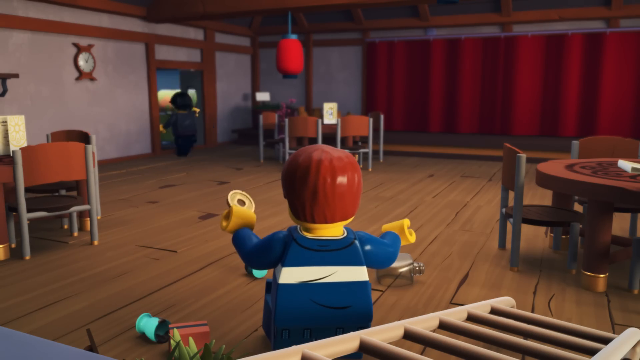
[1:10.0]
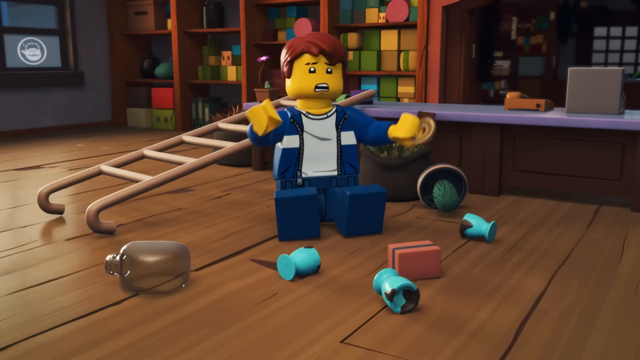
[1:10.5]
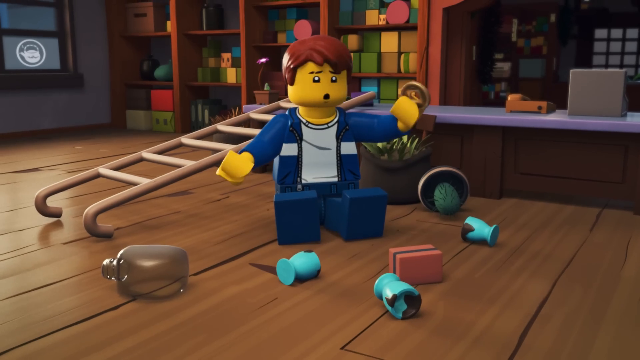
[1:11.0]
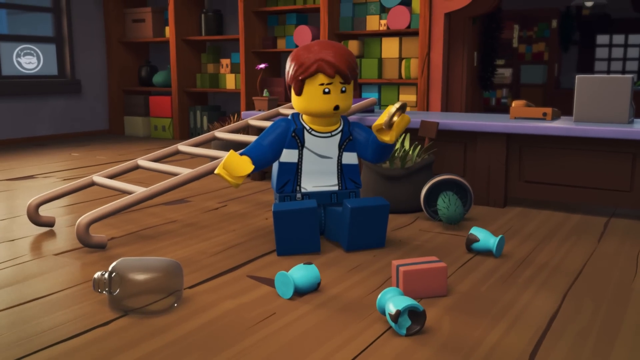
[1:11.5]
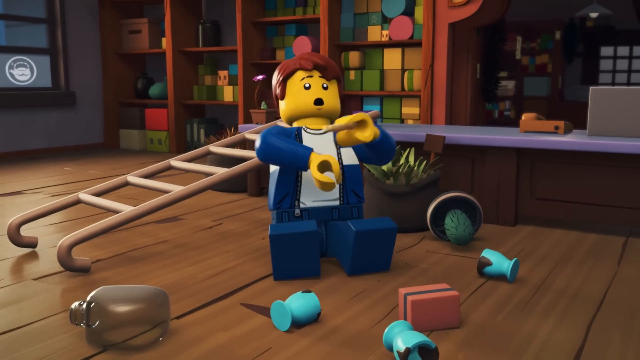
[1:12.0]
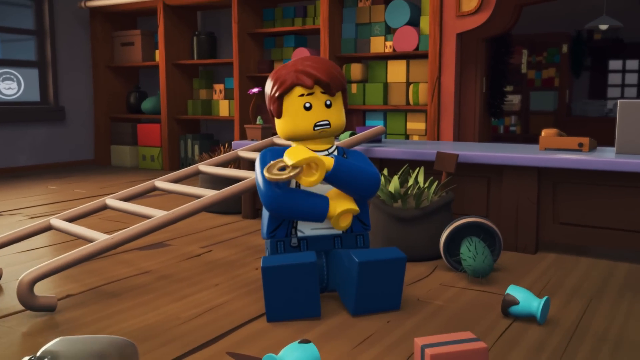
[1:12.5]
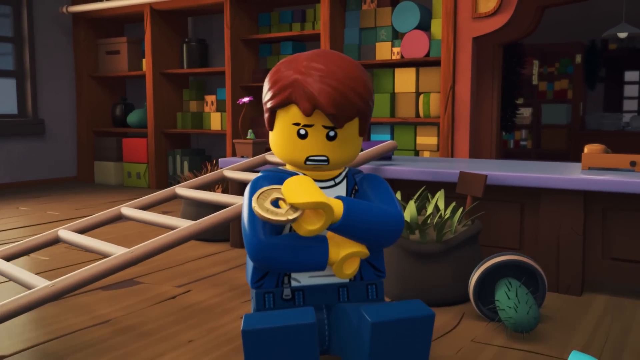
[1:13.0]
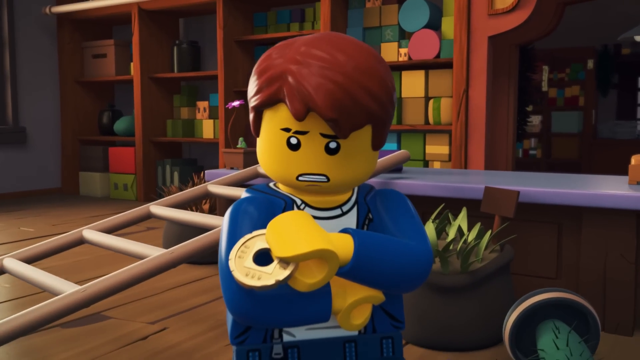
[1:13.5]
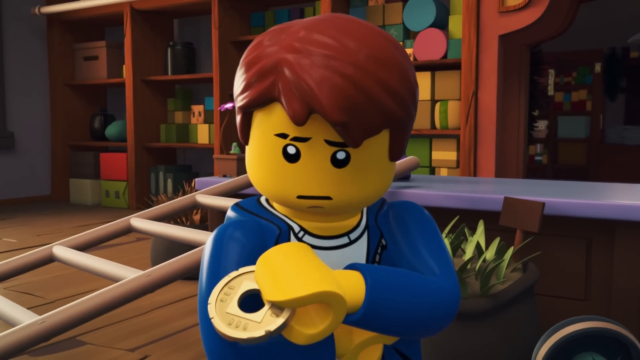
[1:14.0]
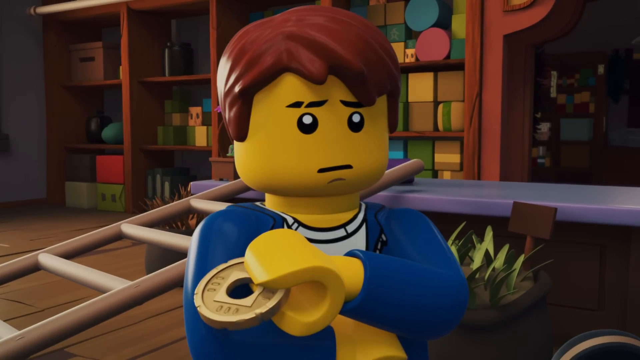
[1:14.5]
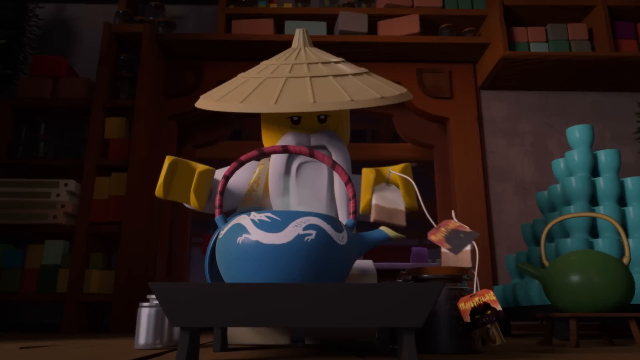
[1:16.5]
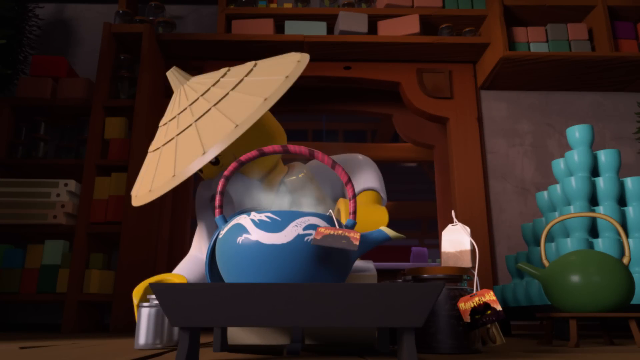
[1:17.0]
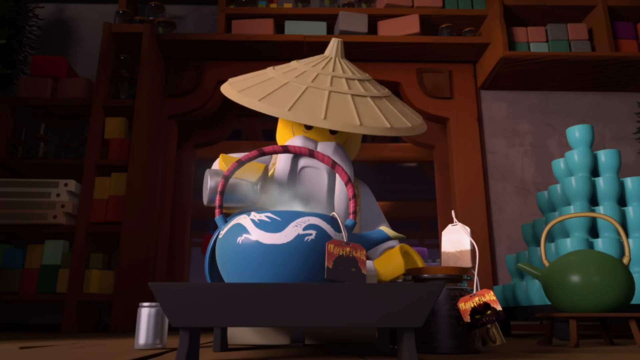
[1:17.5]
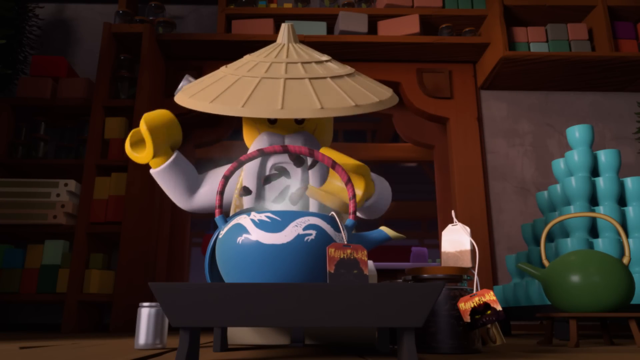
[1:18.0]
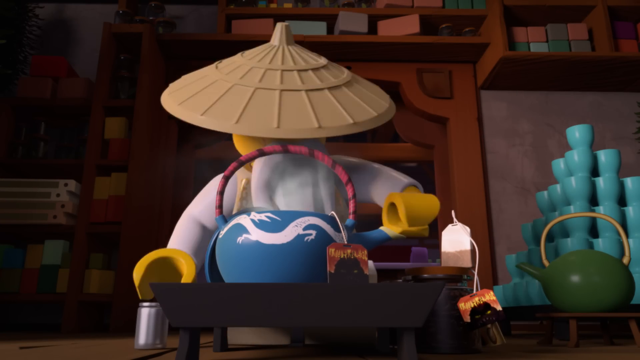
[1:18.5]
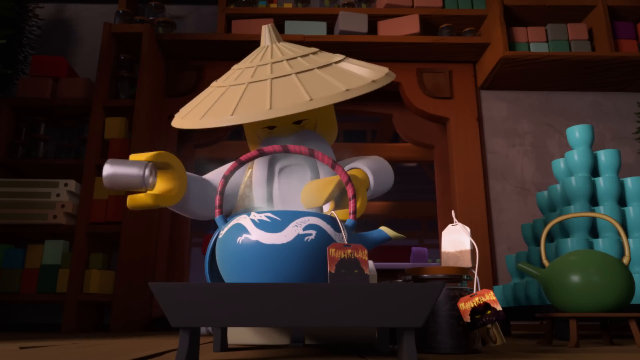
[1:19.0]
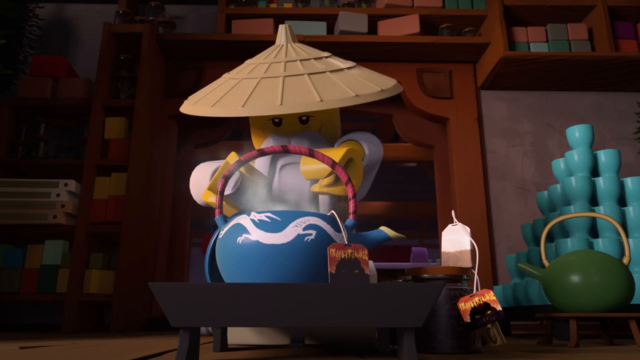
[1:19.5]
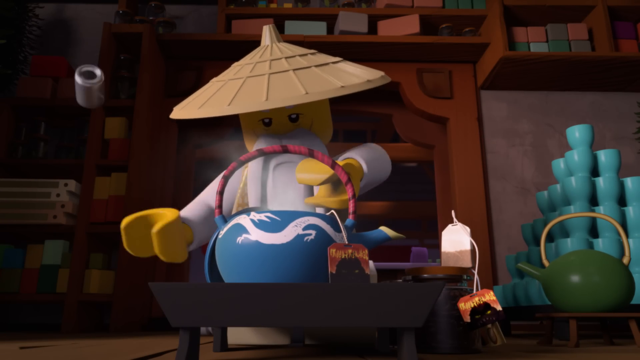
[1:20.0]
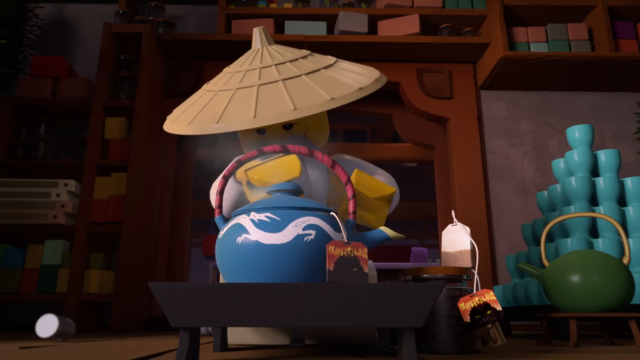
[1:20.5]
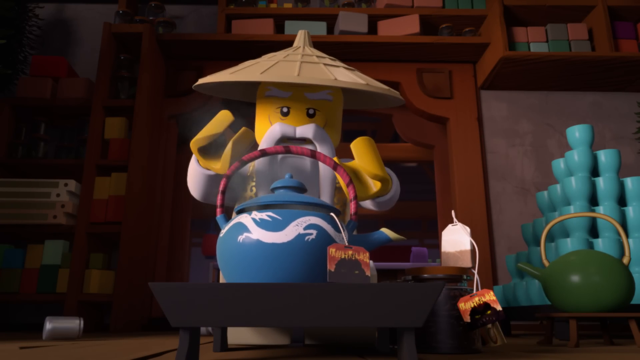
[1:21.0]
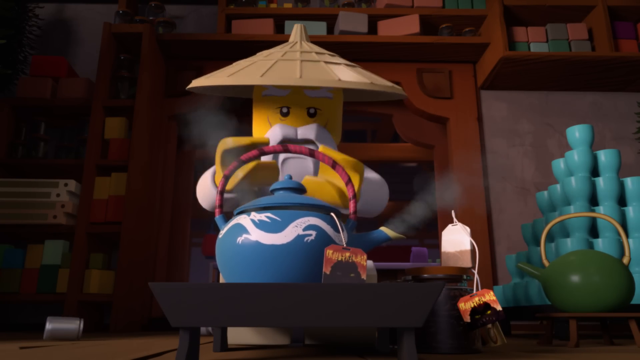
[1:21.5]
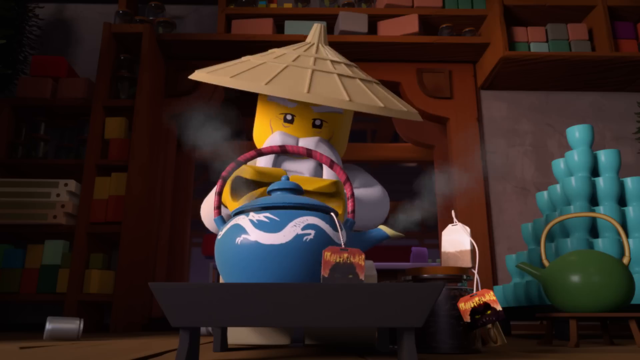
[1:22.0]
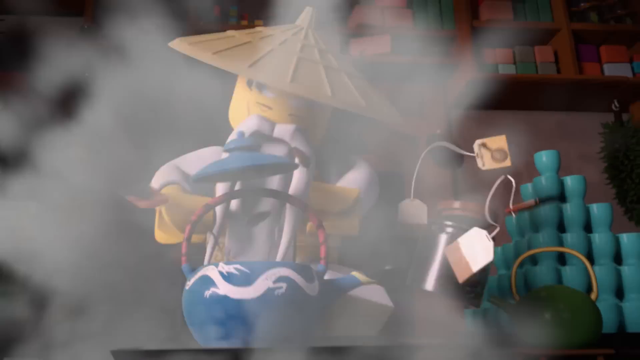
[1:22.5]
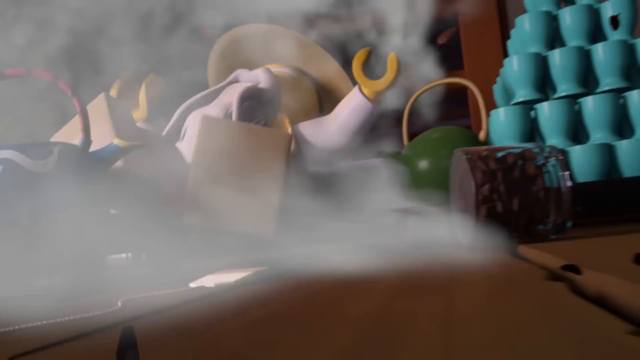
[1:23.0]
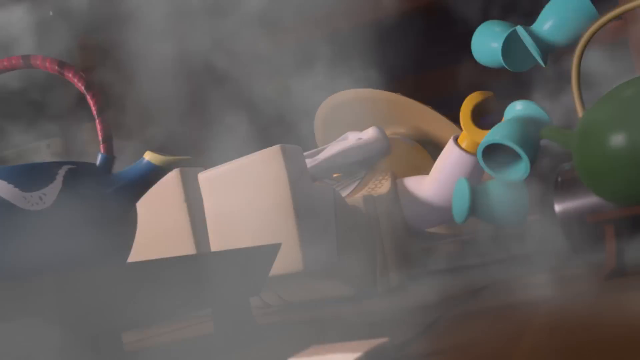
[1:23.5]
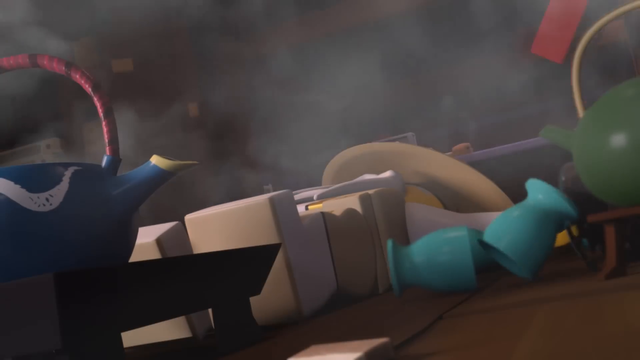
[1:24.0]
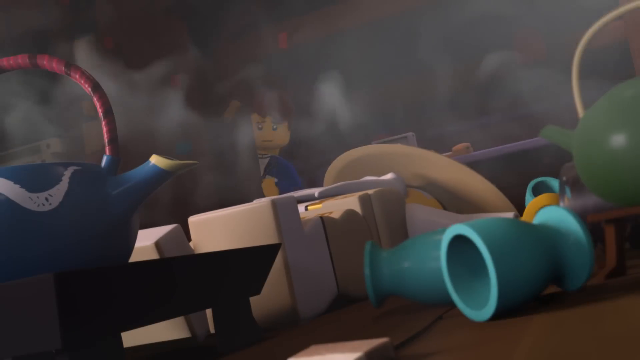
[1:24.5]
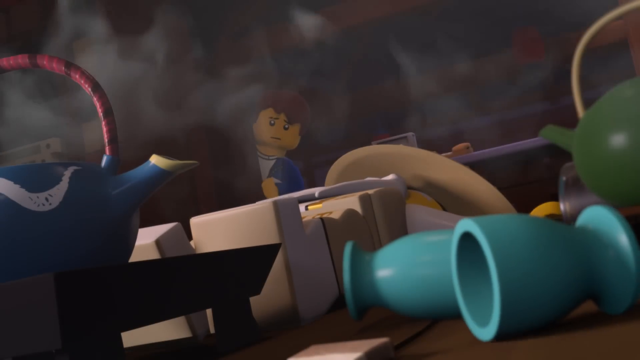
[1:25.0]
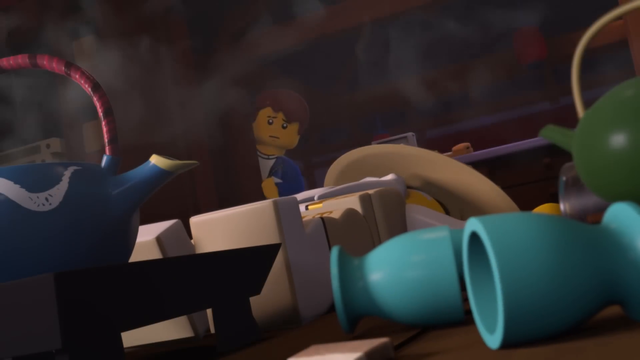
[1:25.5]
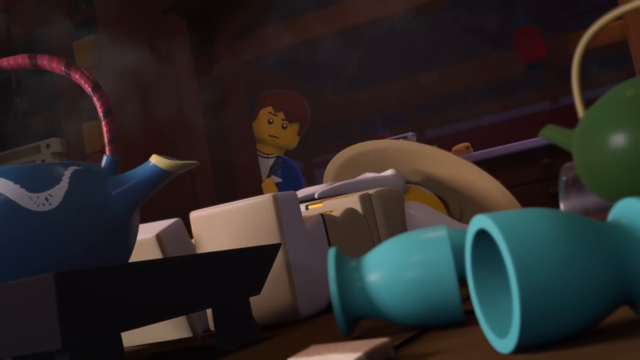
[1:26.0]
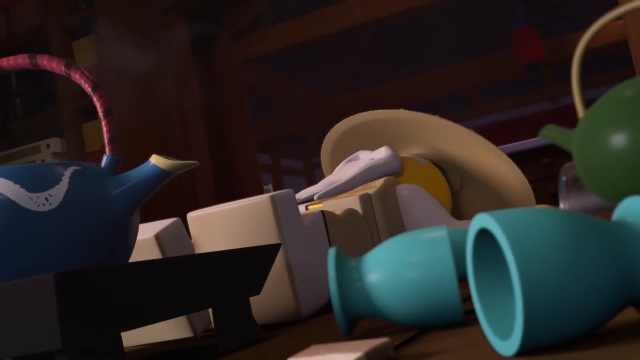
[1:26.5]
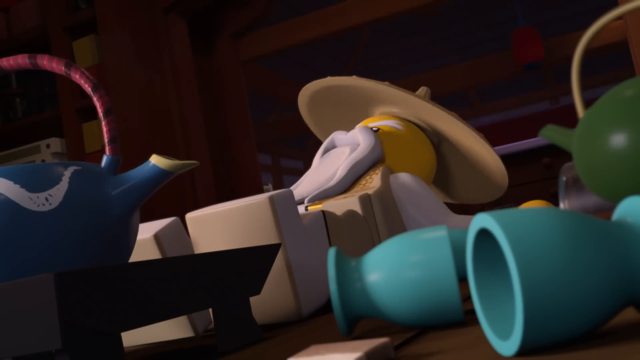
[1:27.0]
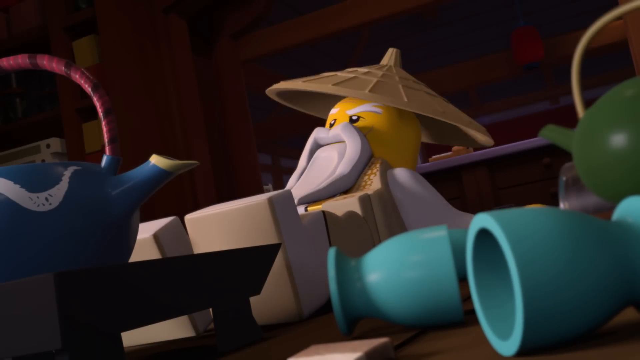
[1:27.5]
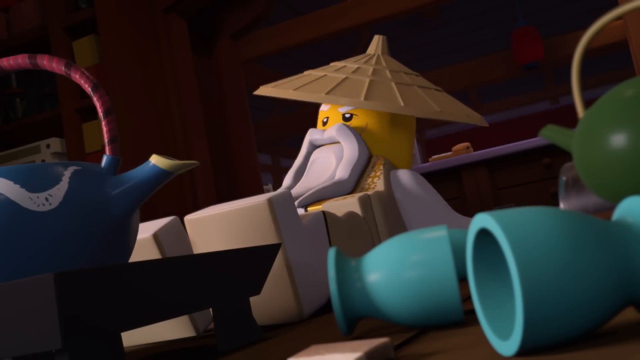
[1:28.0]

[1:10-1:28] The character on the ladder climbs slowly to look for where the coin landed but cannot find it. He loses his balance and falls into the dishes, but he gets his coin back, which leaves the other one in shock. At the end, a character, possibly a wizard, seems to be cooking up some sort of potion on a stove, and after making the mixture he blows up.